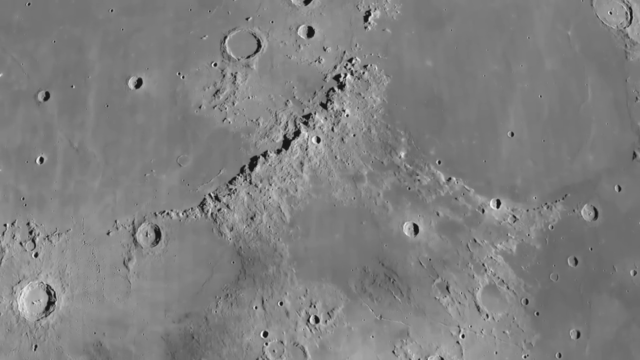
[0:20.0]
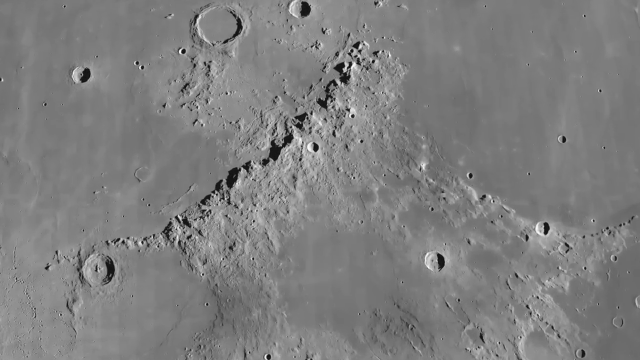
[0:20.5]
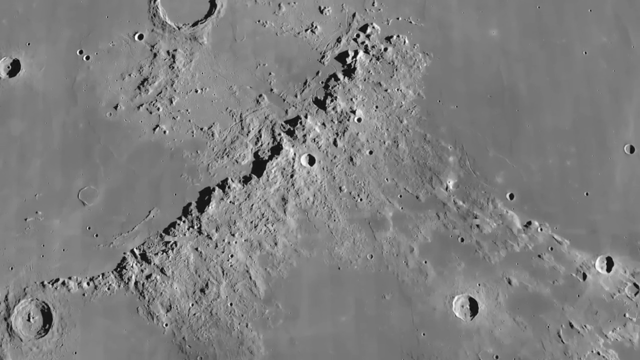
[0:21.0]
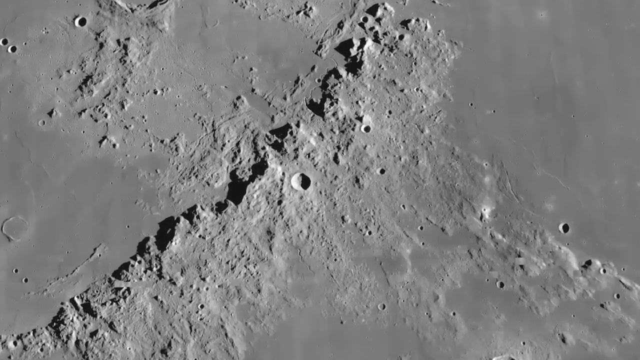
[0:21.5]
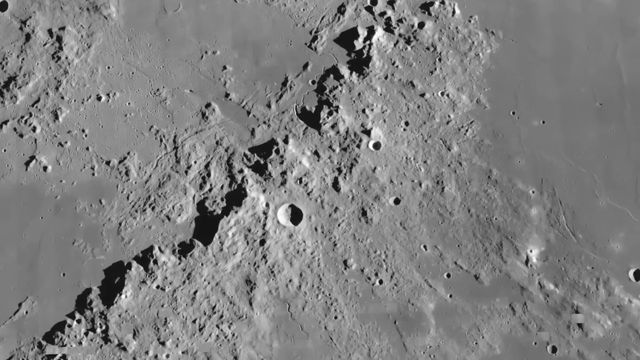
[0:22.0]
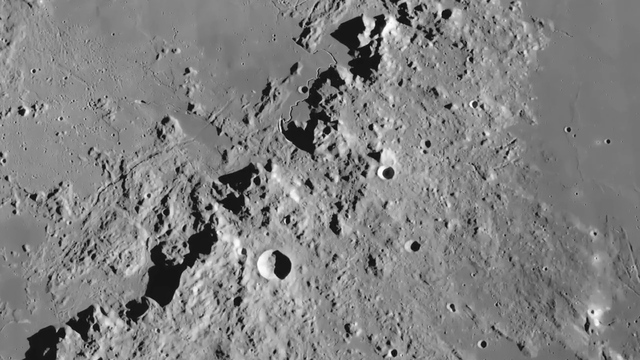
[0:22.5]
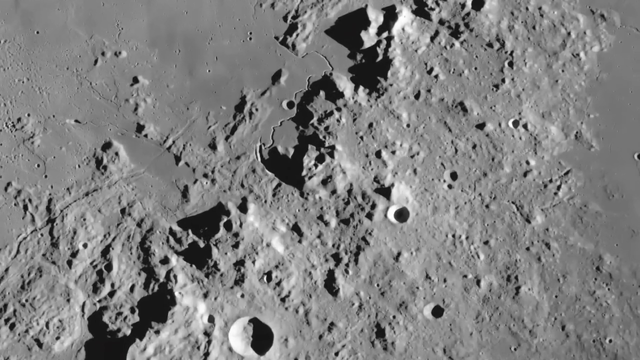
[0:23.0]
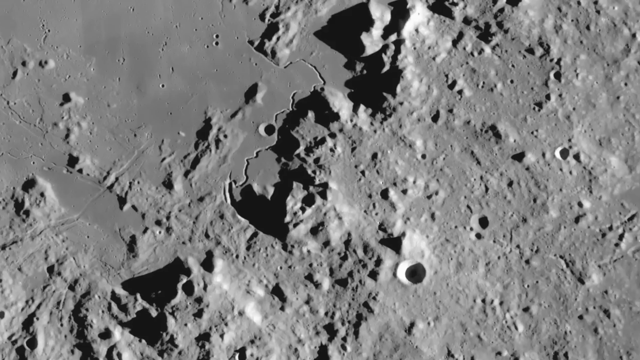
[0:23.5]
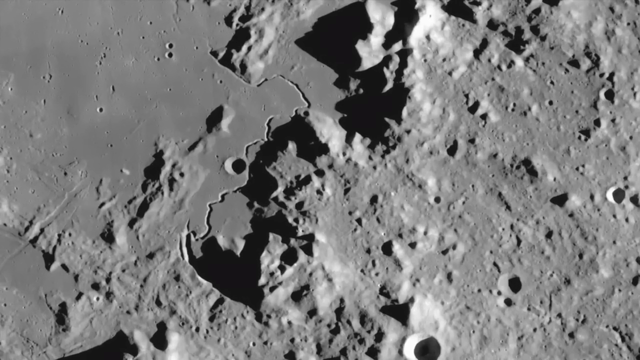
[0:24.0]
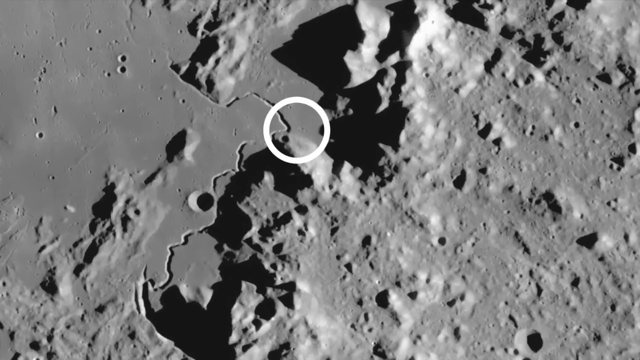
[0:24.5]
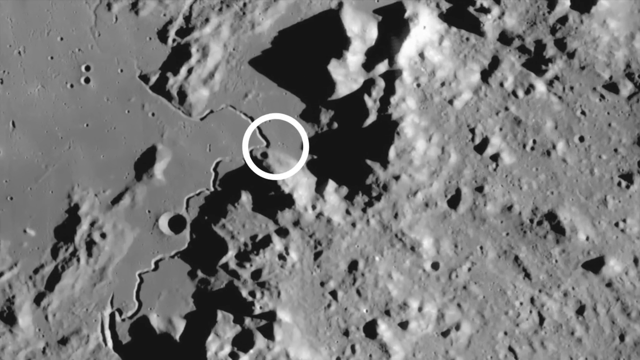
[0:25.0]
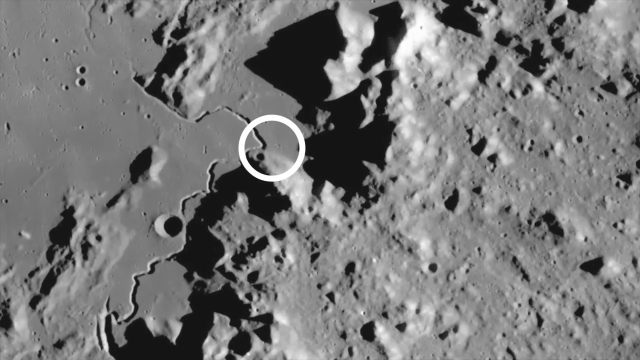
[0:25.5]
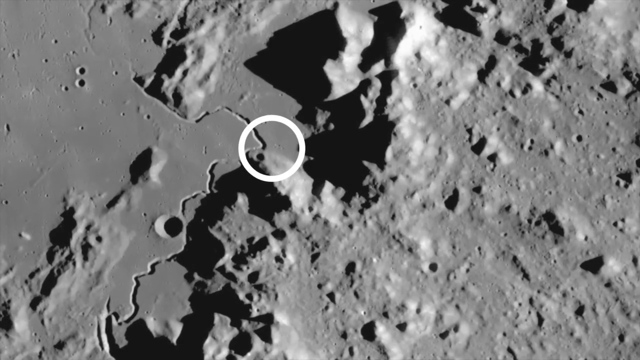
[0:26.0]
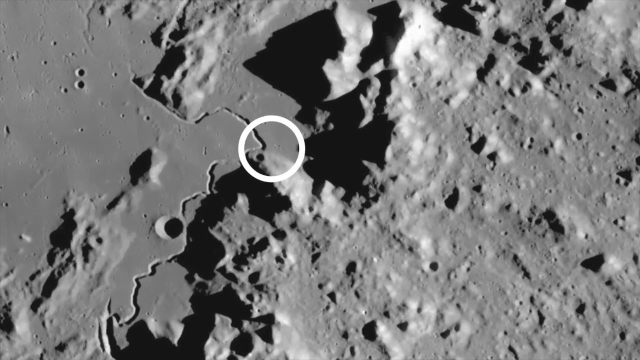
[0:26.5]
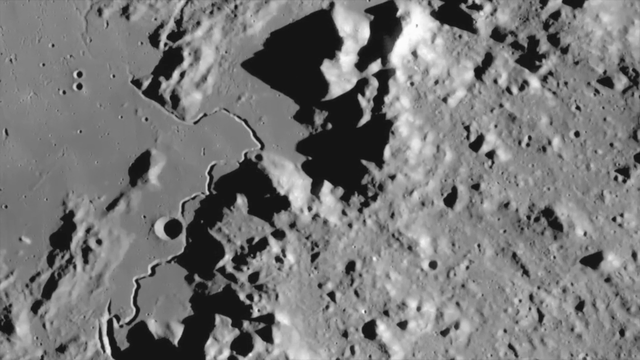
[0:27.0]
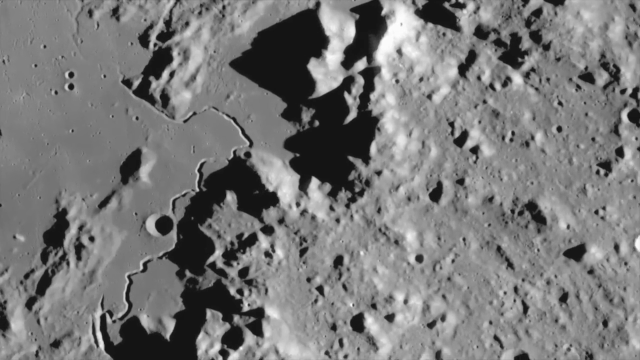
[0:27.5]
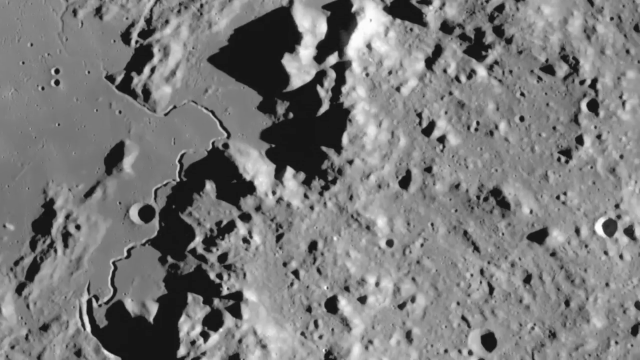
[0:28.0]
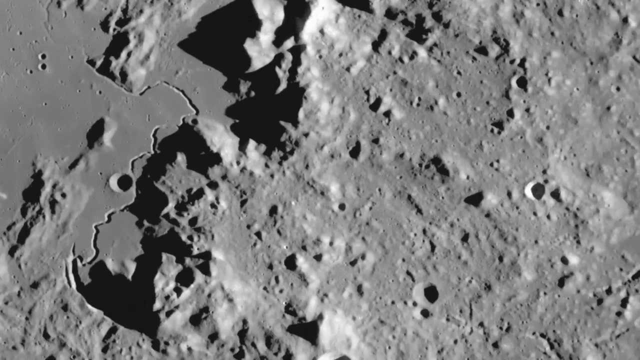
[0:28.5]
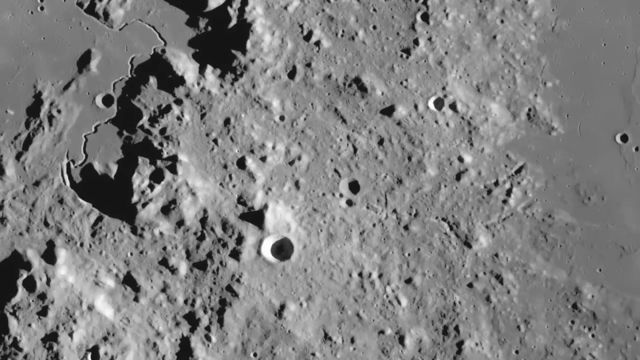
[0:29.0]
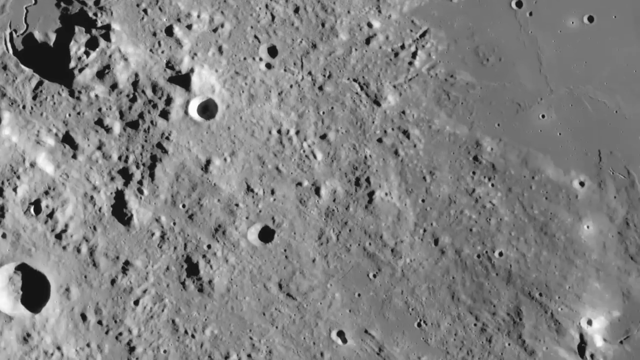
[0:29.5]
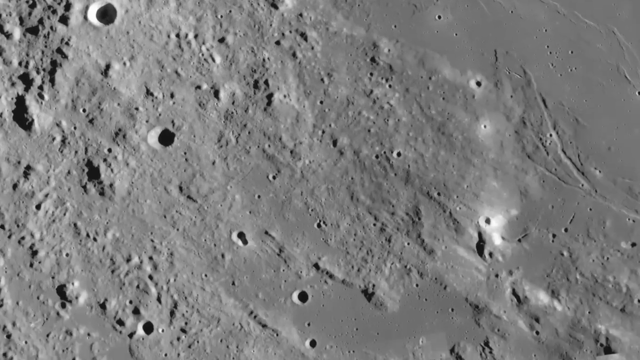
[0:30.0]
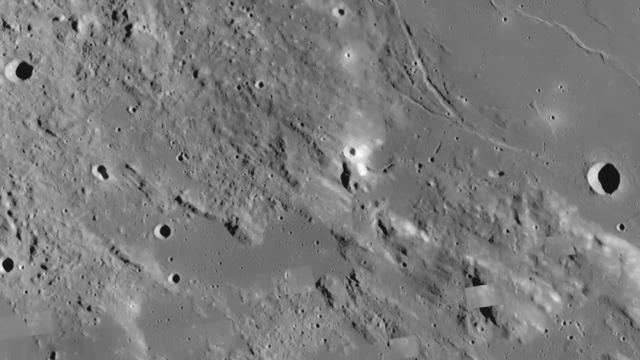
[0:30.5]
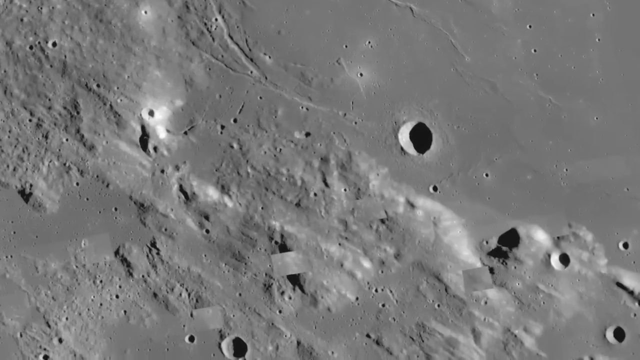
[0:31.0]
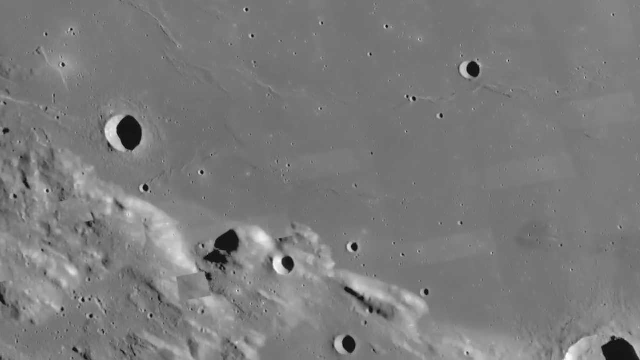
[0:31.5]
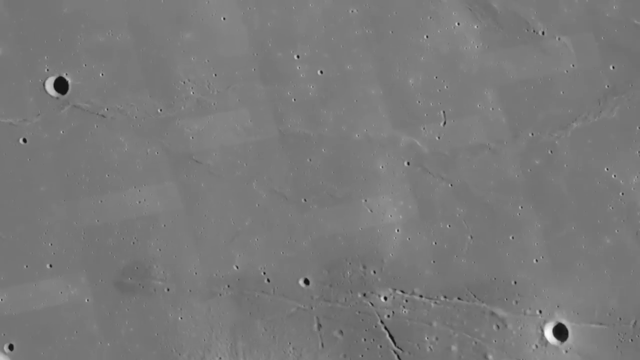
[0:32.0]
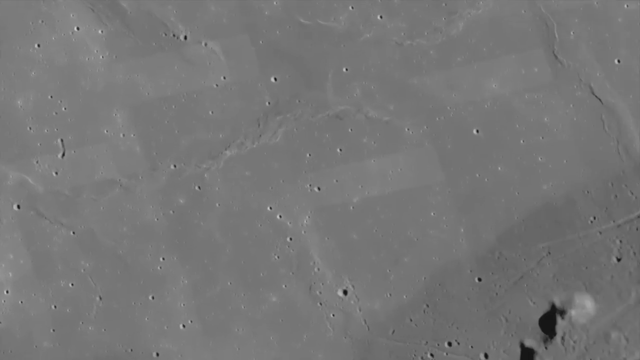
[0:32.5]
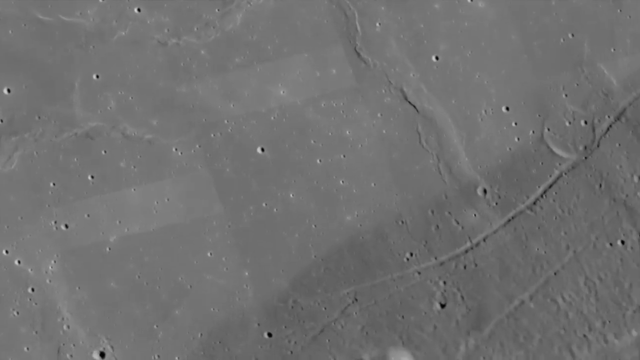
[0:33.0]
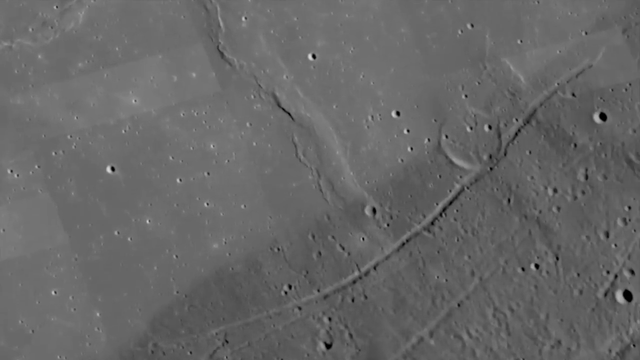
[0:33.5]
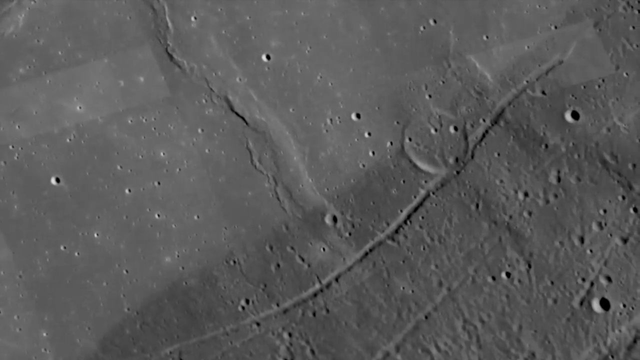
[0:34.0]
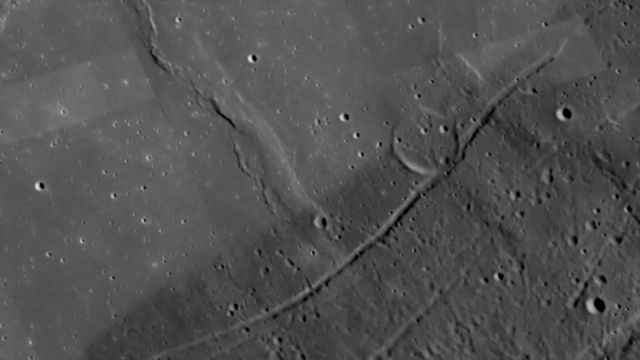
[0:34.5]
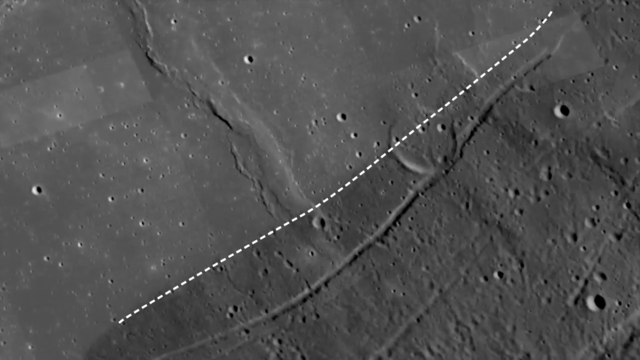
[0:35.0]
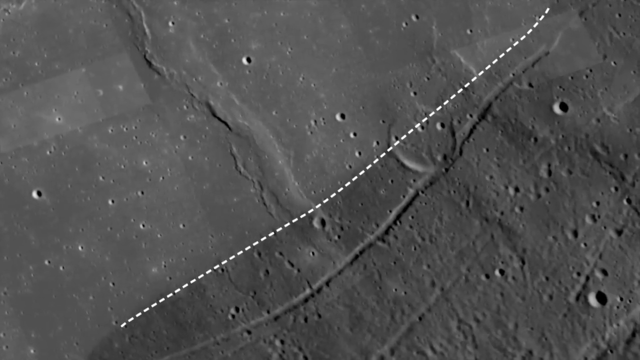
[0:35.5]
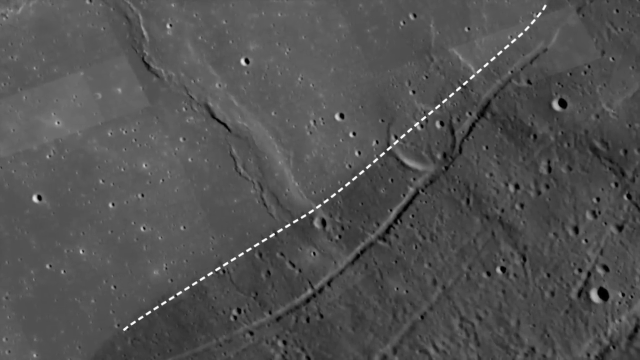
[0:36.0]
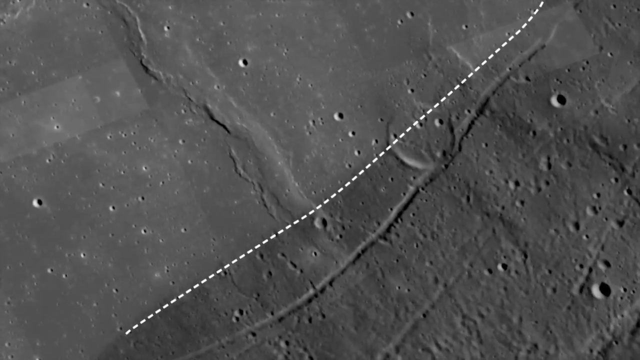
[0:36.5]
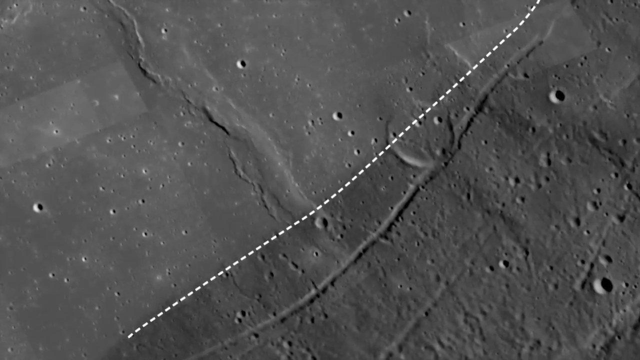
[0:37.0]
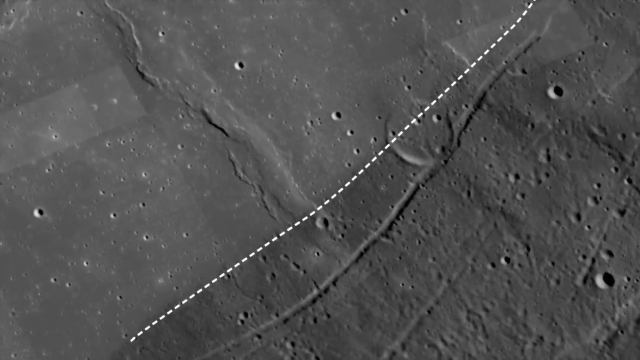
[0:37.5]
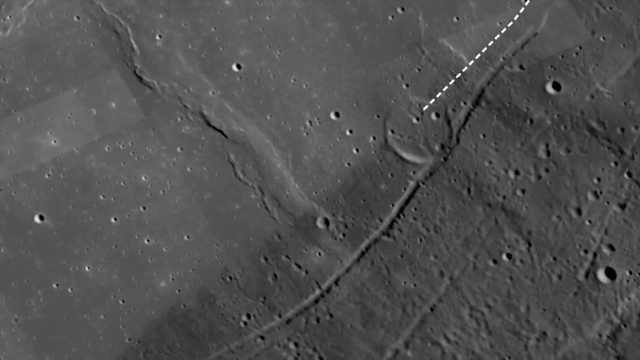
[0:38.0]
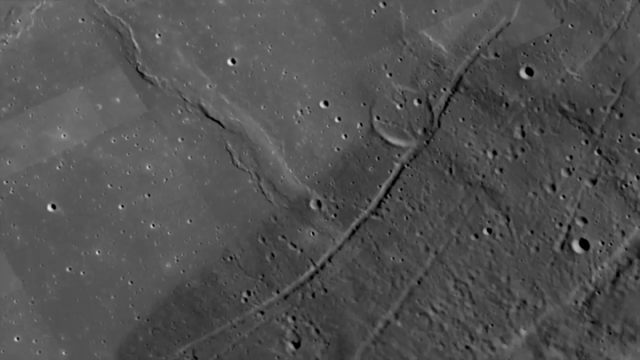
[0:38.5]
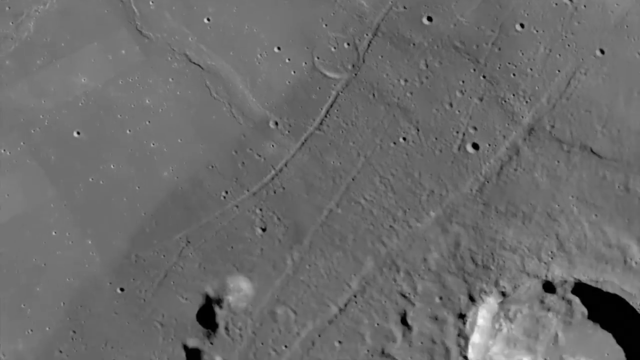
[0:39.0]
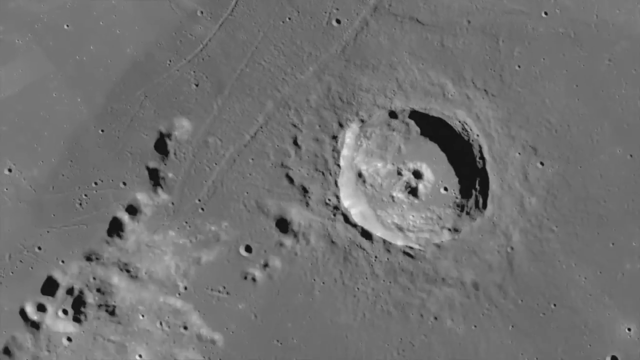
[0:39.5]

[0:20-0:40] A high-resolution black-and-white photograph of the moon's surface is displayed in video format, and the camera zooms in closer and closer. The lunar landscape shows a contrast of flat, smooth plains and rocky highlands, with shadows near the mountainous ridges. The video zooms further into a mountainous region, where a white circle surrounds a specific area. Sunlight comes from the right, with shadows on the left side of the ridge line. The camera pans to the right and pauses at a flat area of plain, where a dotted white line comes across to draw a boundary or border. There is also a flat straight line in the moon's surface next to craters.